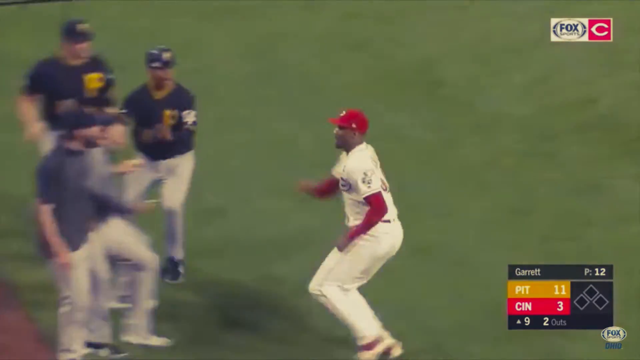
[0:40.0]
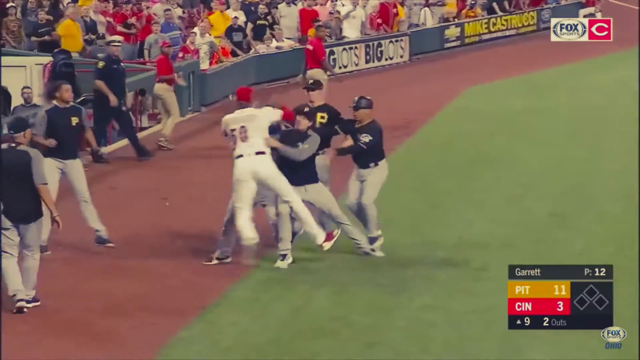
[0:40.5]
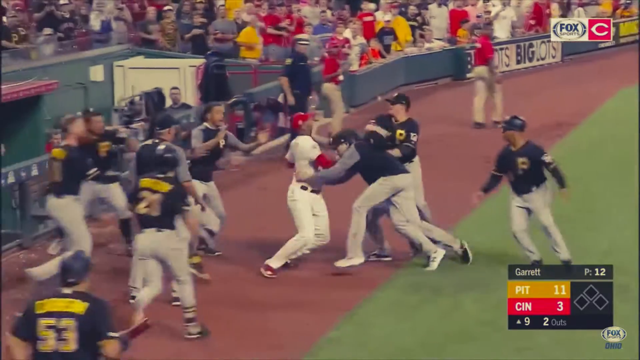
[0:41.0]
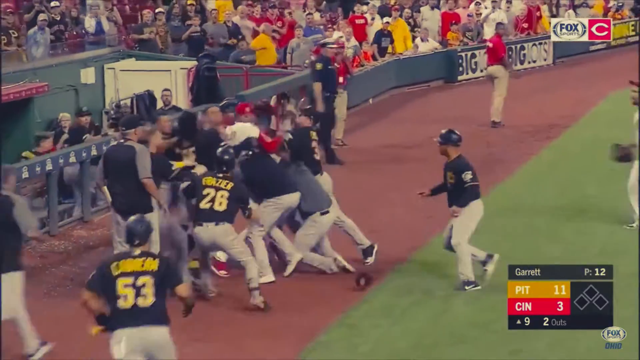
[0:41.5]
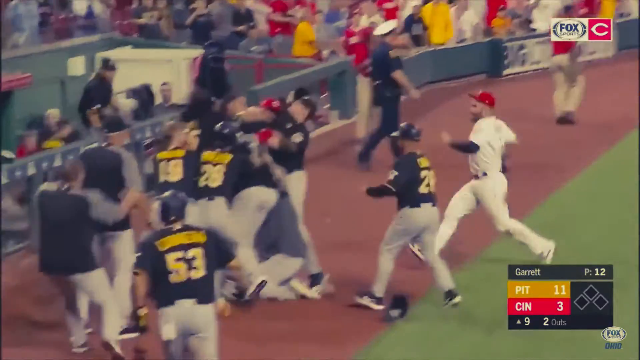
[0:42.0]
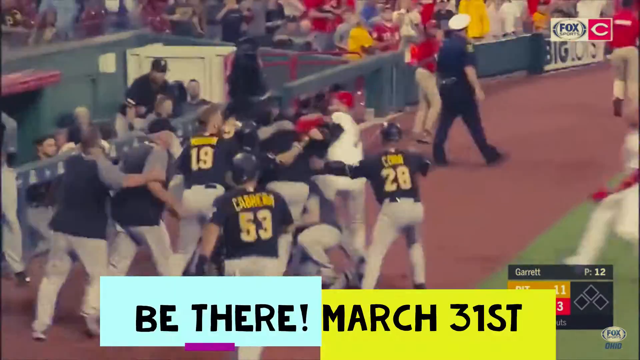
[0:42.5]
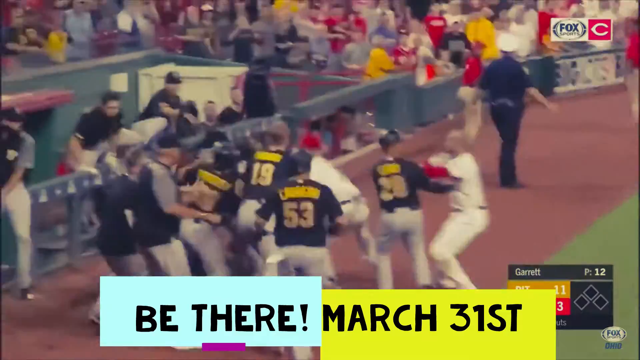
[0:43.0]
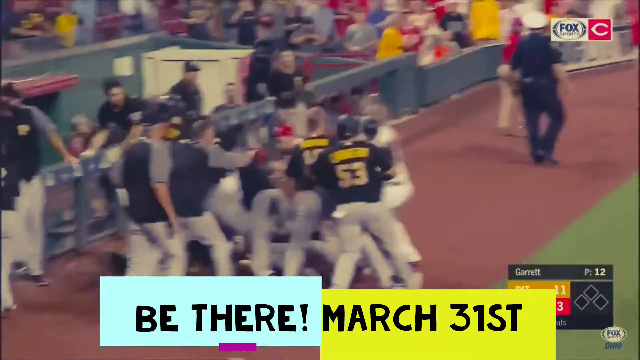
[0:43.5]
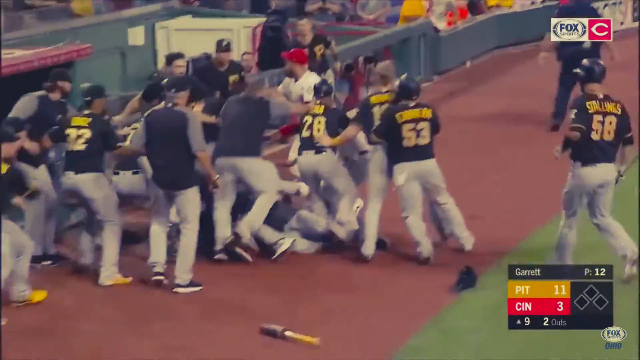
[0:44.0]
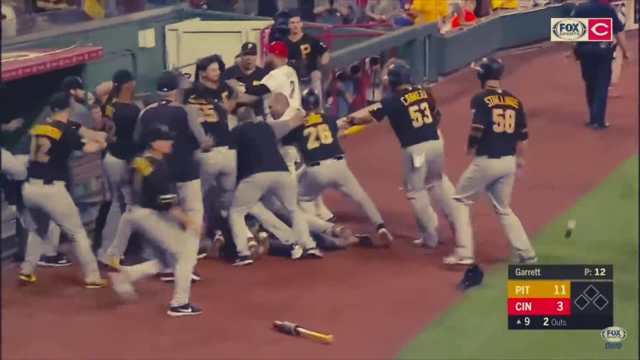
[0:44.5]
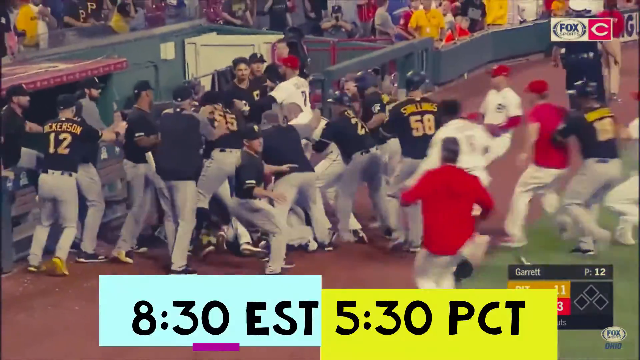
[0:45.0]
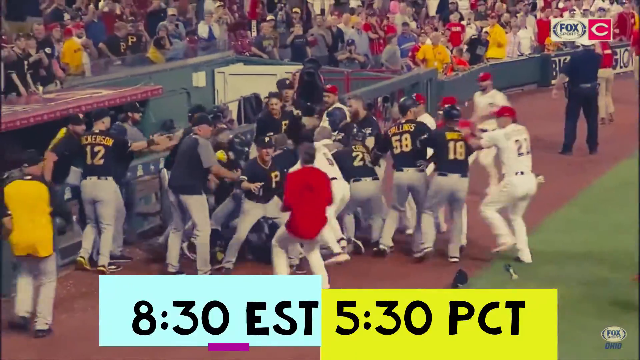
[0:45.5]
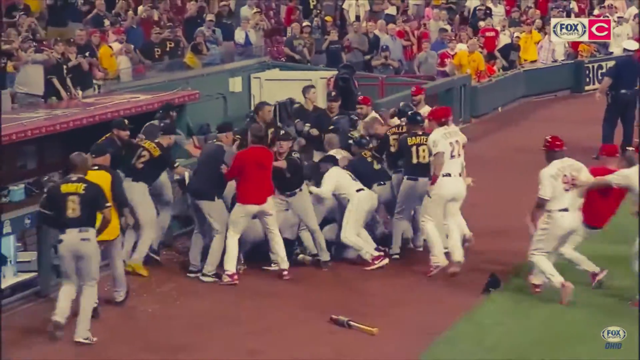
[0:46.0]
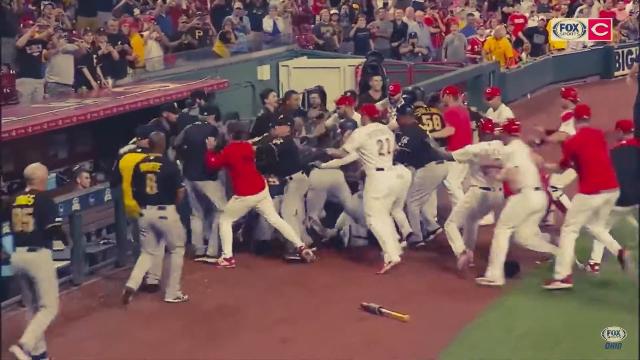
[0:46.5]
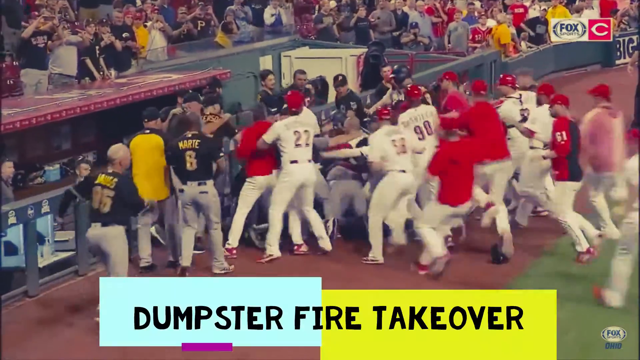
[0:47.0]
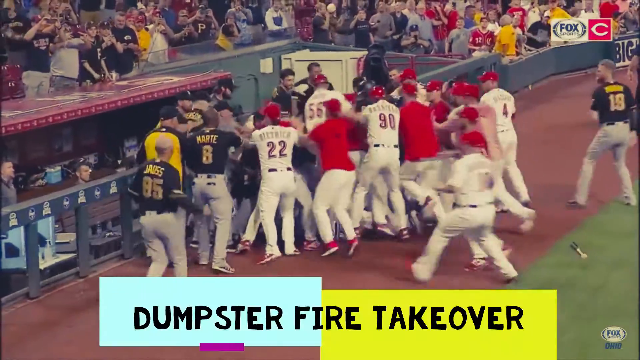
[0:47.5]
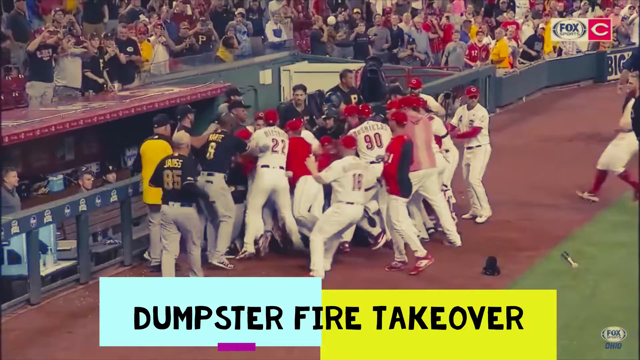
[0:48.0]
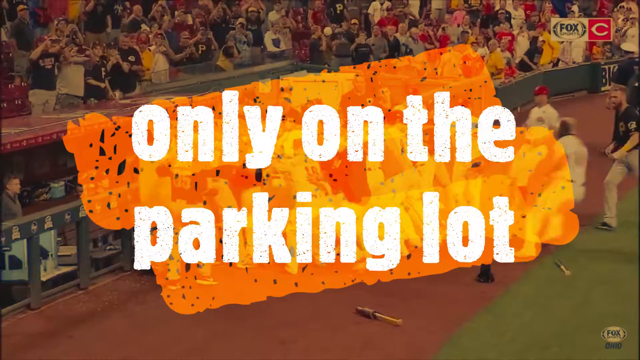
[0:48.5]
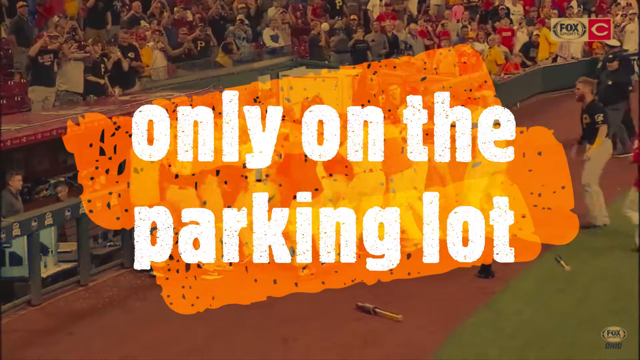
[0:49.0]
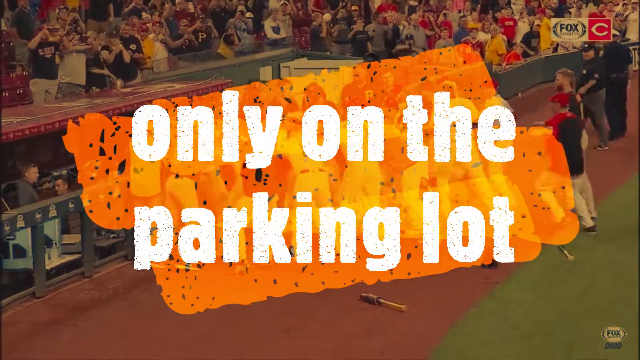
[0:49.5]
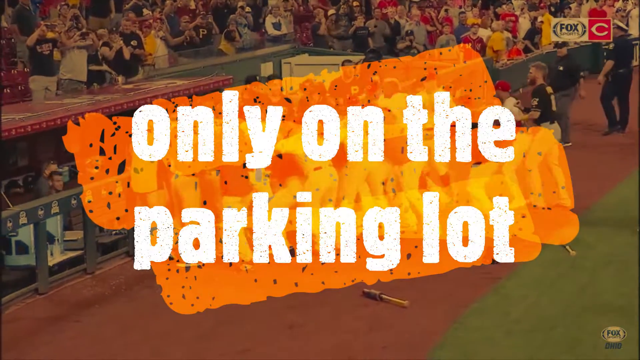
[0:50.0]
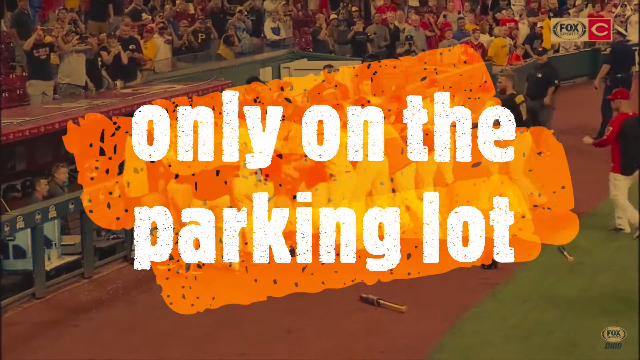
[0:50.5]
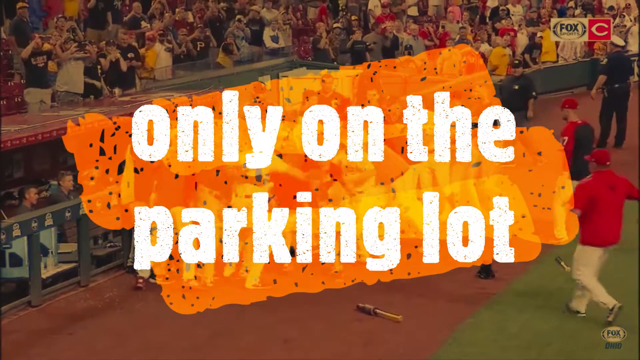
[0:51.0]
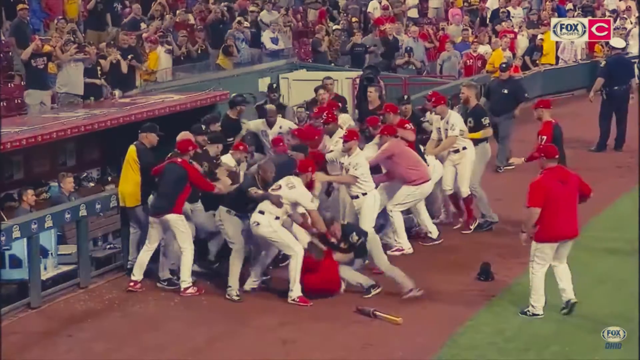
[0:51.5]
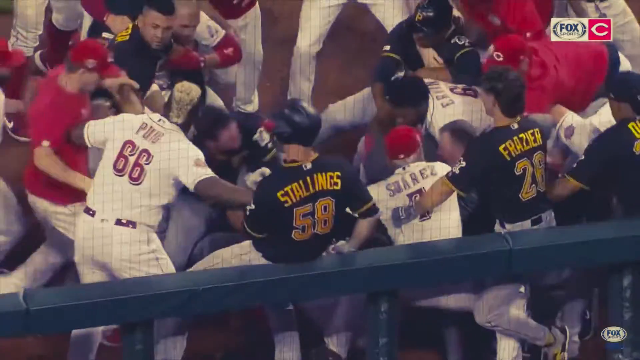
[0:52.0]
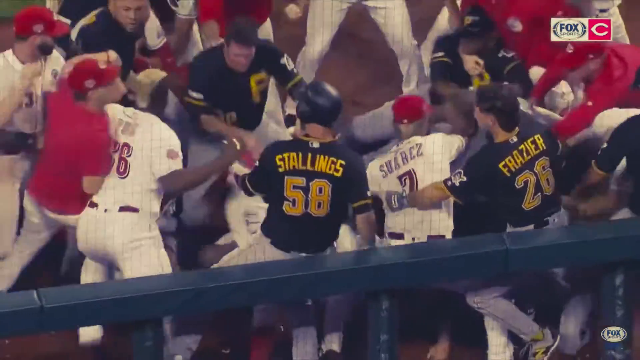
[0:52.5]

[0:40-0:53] Different baseball events are shown. In two of them, the players get into a big fight, and many team members gather to stop it while others fight back in support of their teammate. A man is dancing. Players wear red, blue and green. Hyundai, Kickstarter and Benjamin Moore appear as sponsors of the game. The last game has many supporters, and the players fight in front of them.